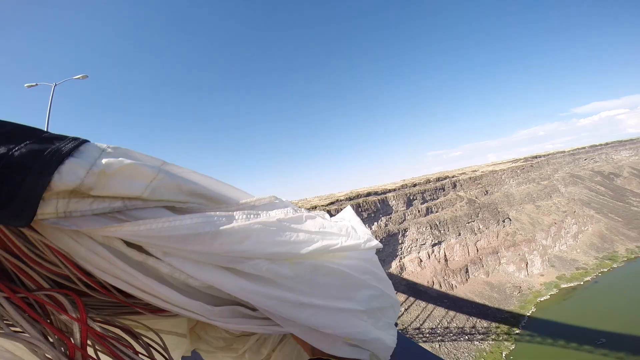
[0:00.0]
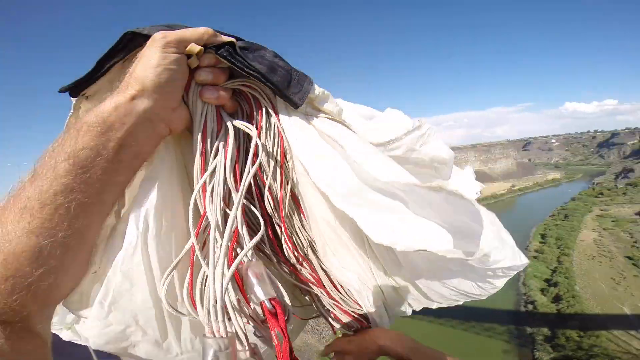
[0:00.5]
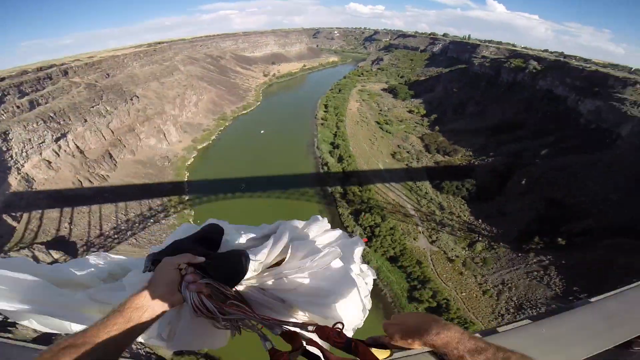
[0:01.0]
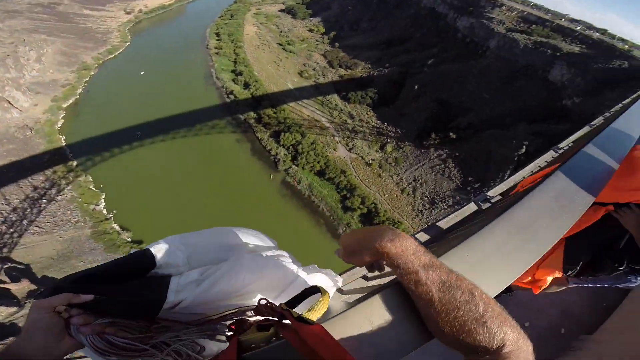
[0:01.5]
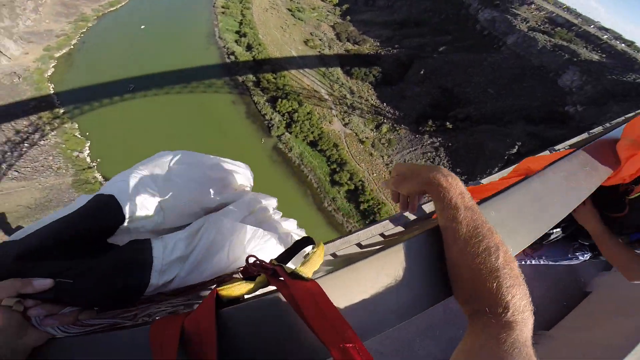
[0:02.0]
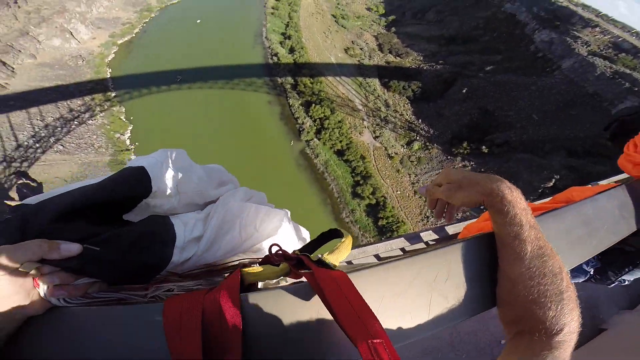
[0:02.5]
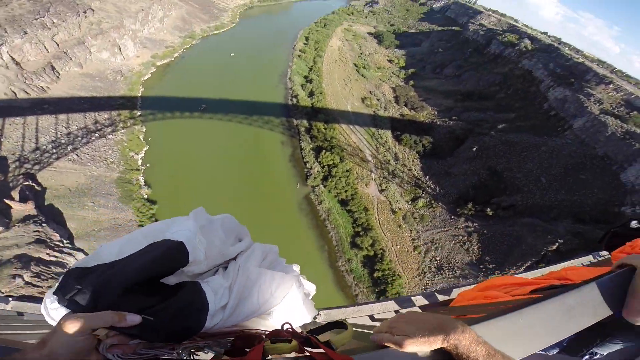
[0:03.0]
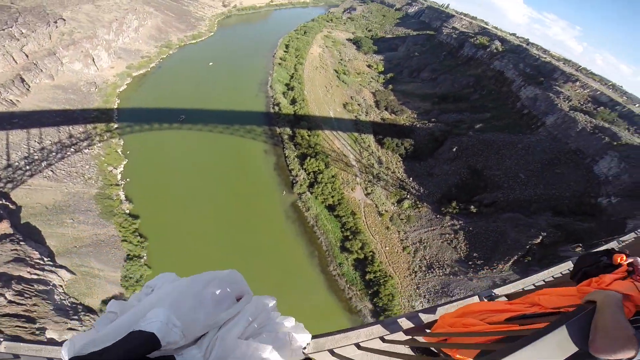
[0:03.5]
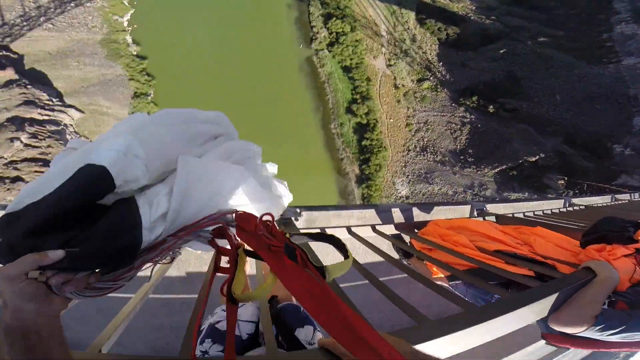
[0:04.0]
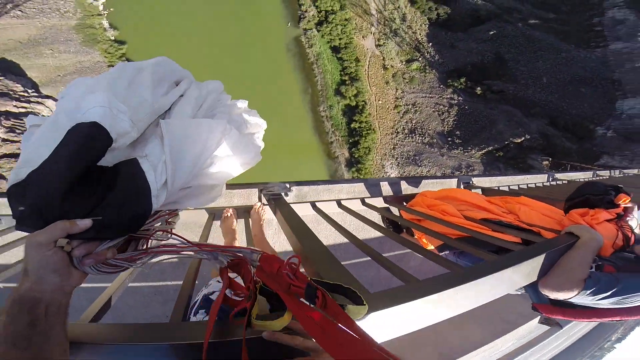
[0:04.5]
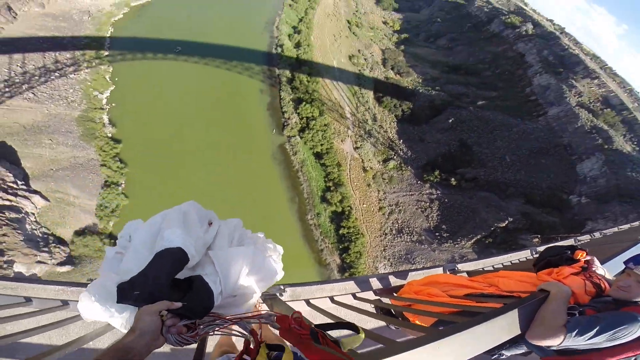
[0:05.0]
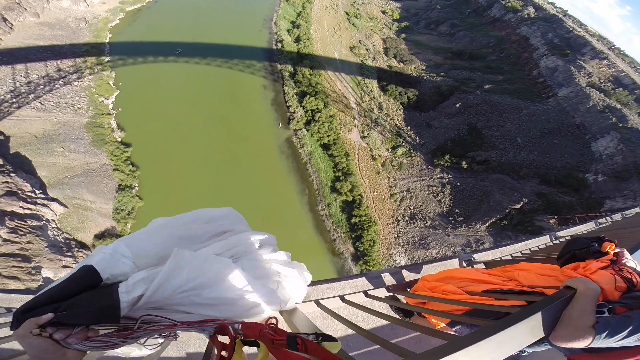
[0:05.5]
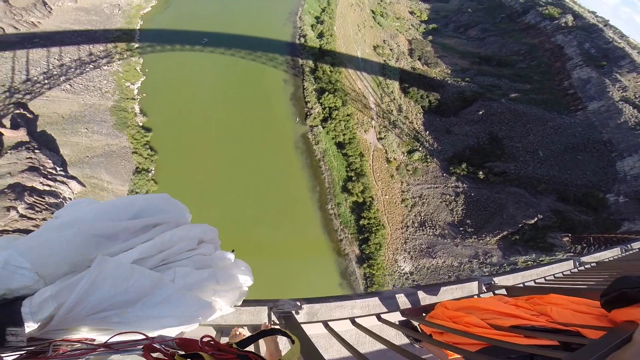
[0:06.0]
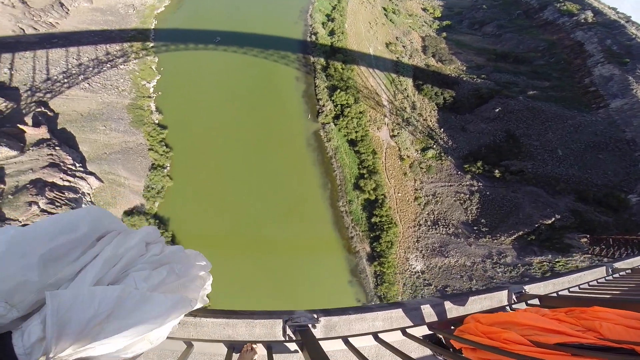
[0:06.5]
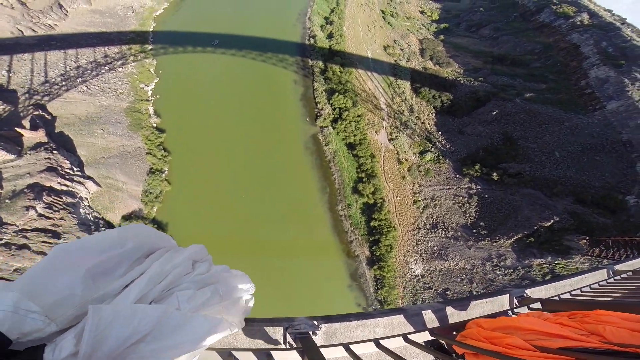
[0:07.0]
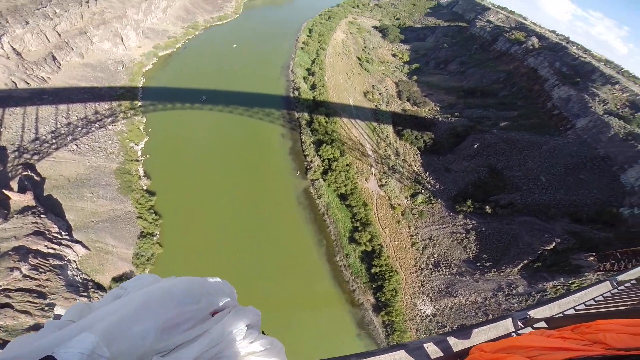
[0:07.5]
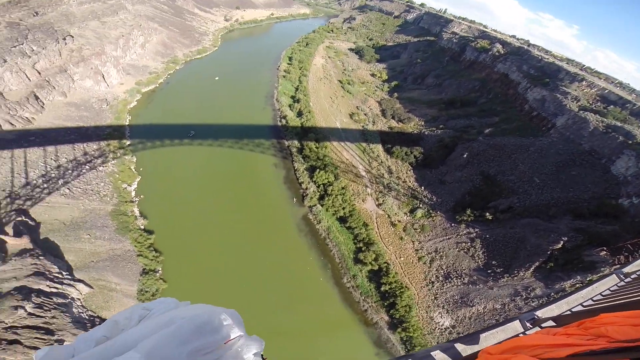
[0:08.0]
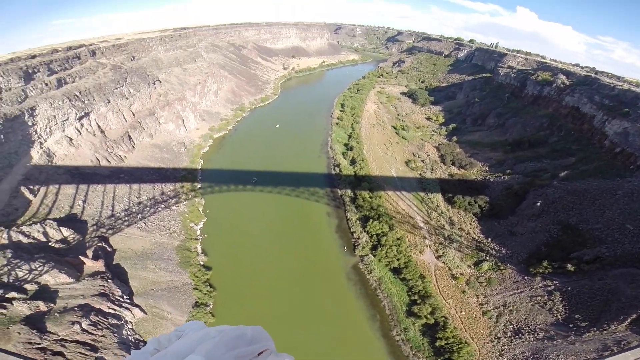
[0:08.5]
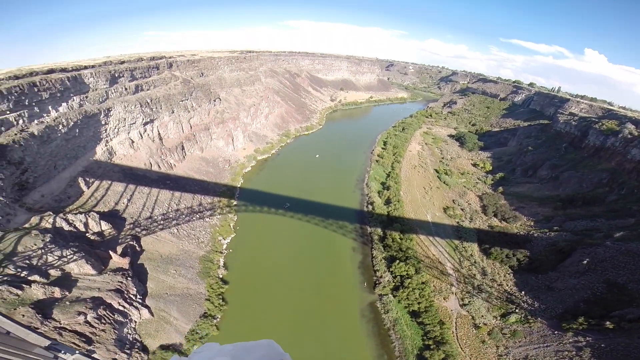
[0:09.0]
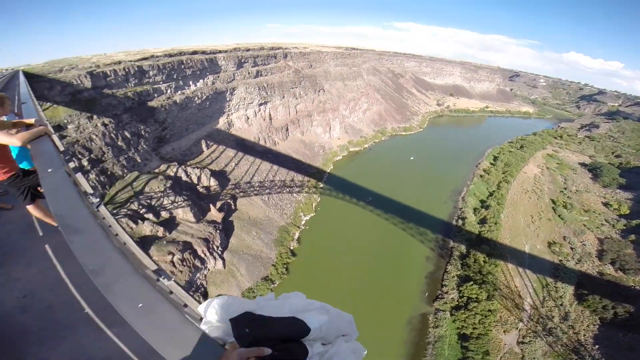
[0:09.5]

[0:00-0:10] An aerial shot shows someone on a big bridge, whose shadow is cast over what seems to be a river. It looks like the beginning of a bungee jump. A cloth or something big like a parachute dangles over the edge, and a person's left hand is slightly visible. There seem to be another person or two next to the individual. It is a bright day, and there look to be mountain areas around. There do not seem to be many cars on the bridge, and a long river runs down below.